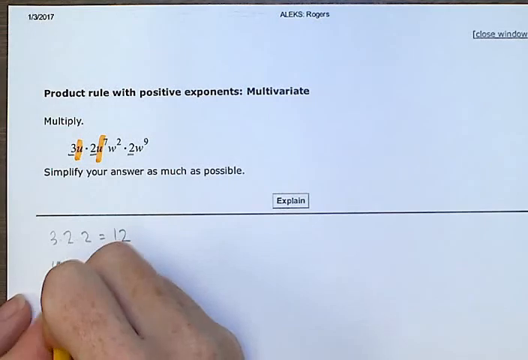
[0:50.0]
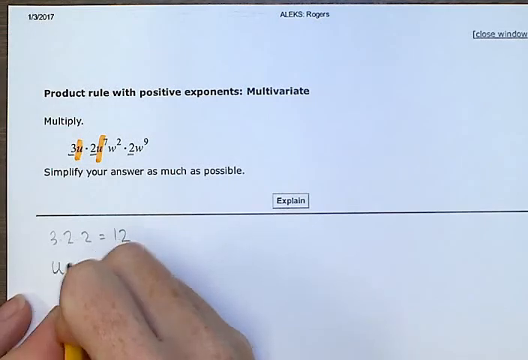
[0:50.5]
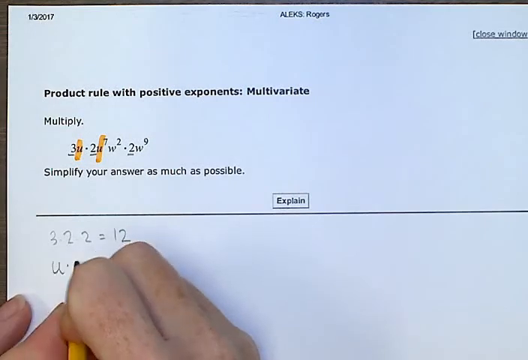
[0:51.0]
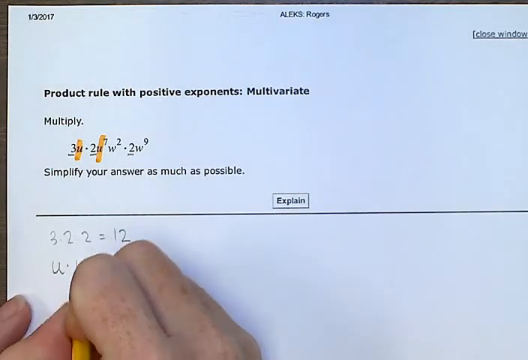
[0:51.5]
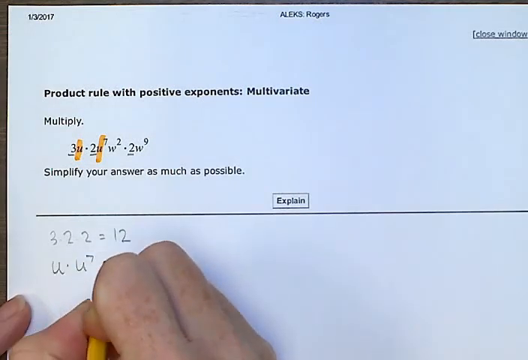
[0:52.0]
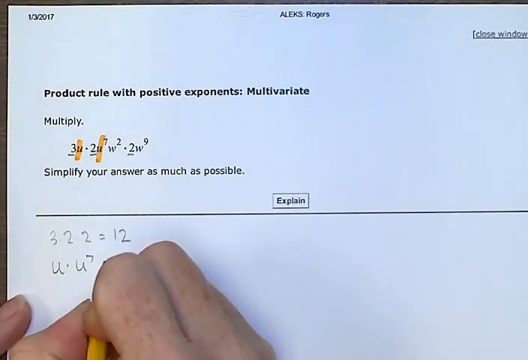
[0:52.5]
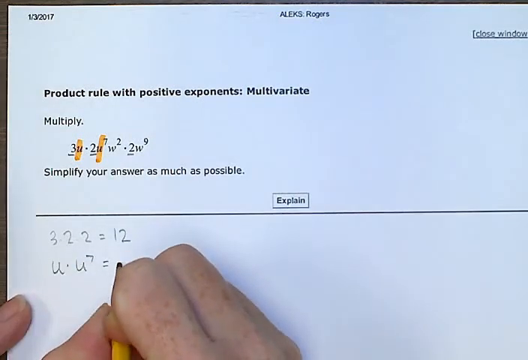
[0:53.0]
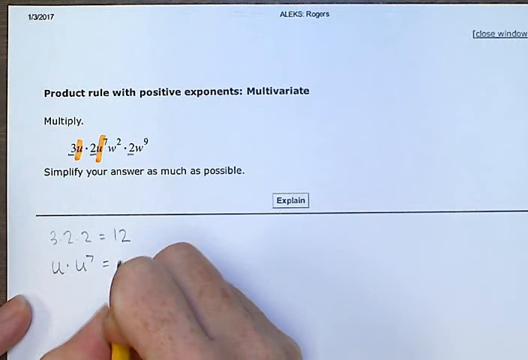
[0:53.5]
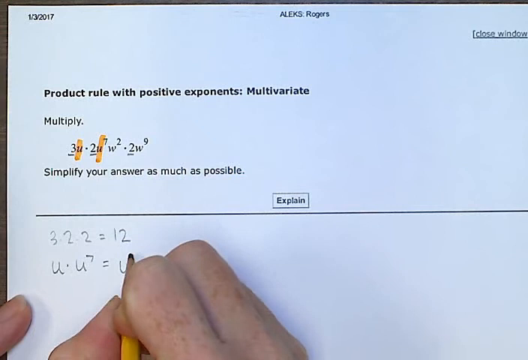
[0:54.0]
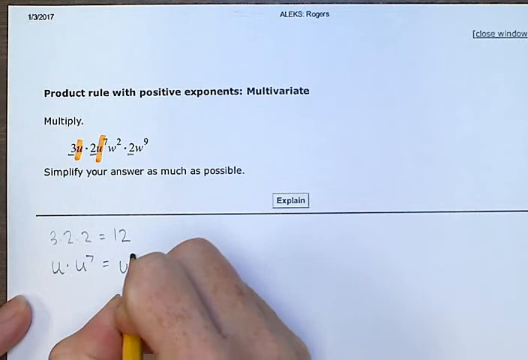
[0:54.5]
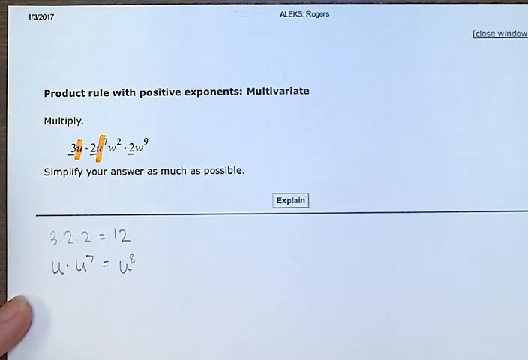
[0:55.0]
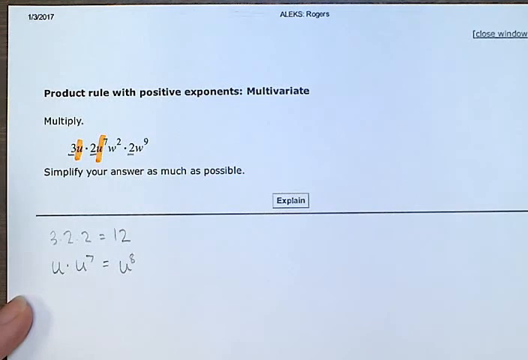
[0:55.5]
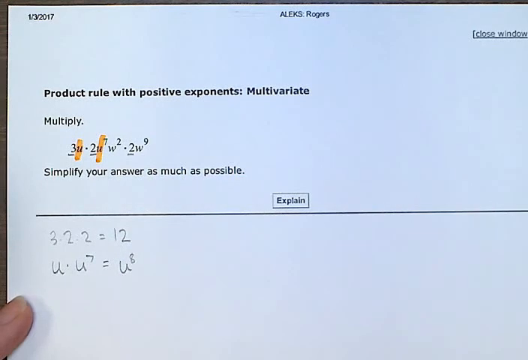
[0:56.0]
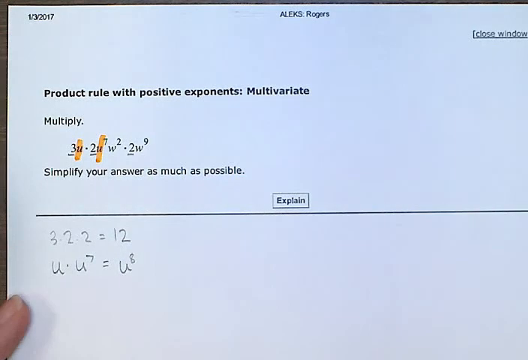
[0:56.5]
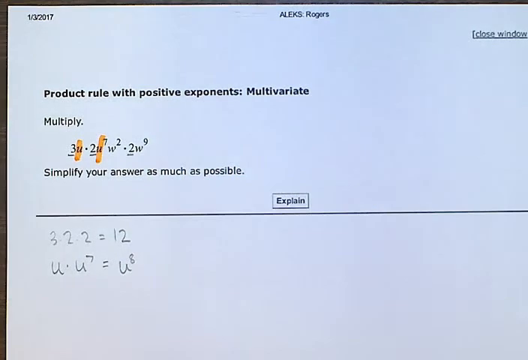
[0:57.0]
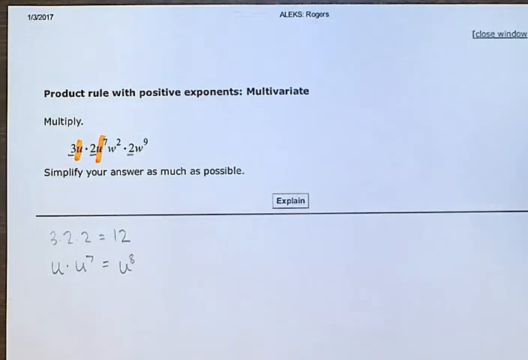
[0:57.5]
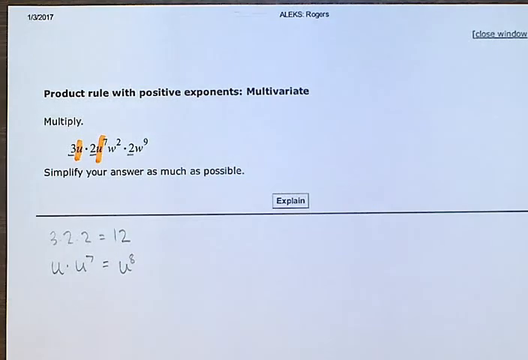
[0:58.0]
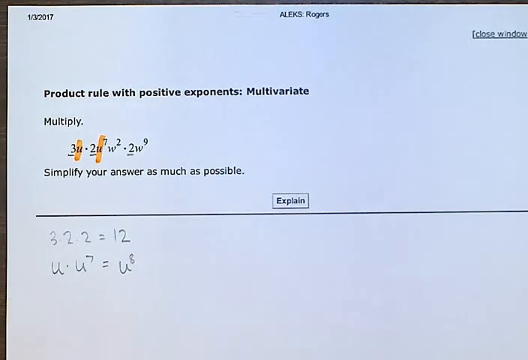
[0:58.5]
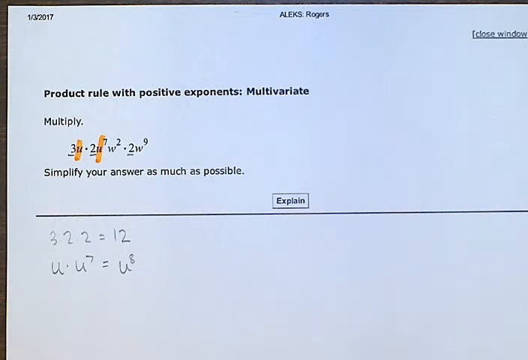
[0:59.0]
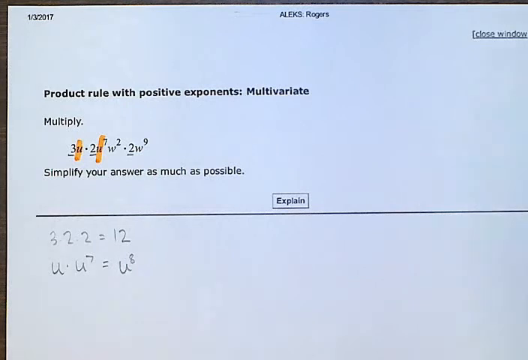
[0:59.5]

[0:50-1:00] Two fingers of the left hand and three fingers of the right hand are visible in the bottom left-hand corner. The yellow pencil appears and they start writing a new sum underneath the one that reads 3 2 2 equals 12: they write U dot U 7 equals U 8. Their hand then goes down to the centre of the screen and out of view, leaving two left fingers in the bottom left-hand corner, holding on to the paper.